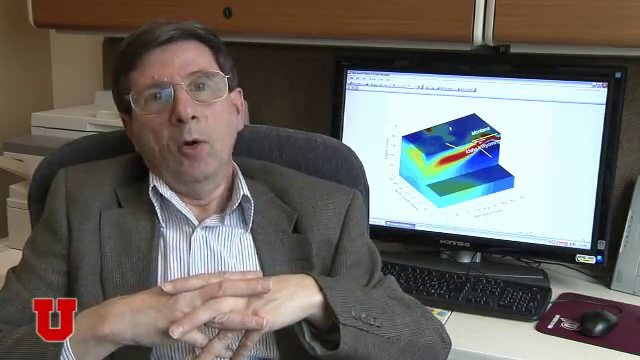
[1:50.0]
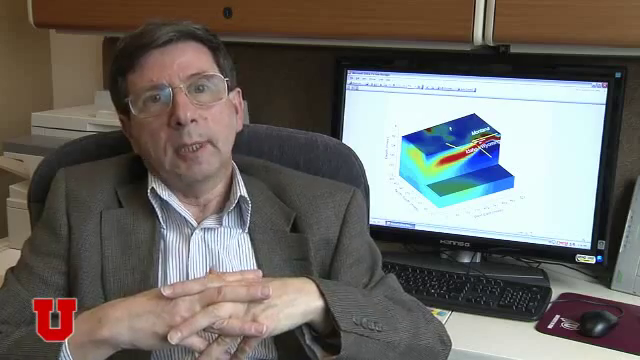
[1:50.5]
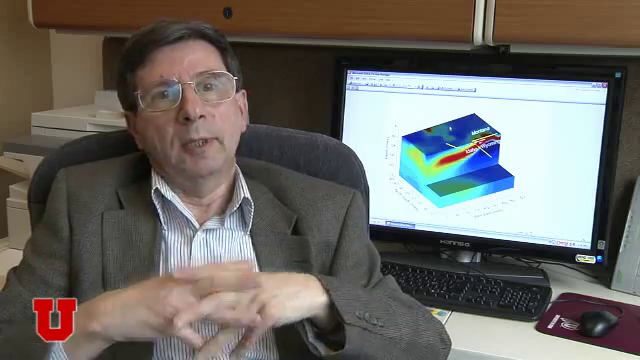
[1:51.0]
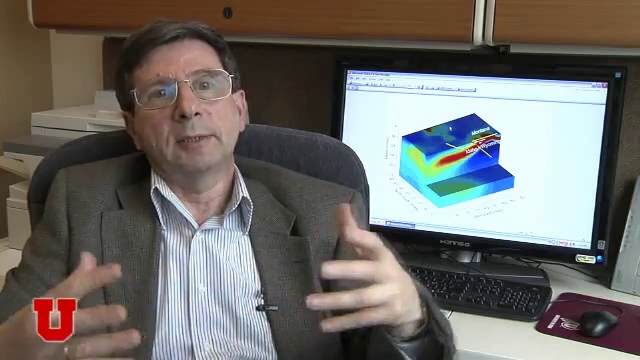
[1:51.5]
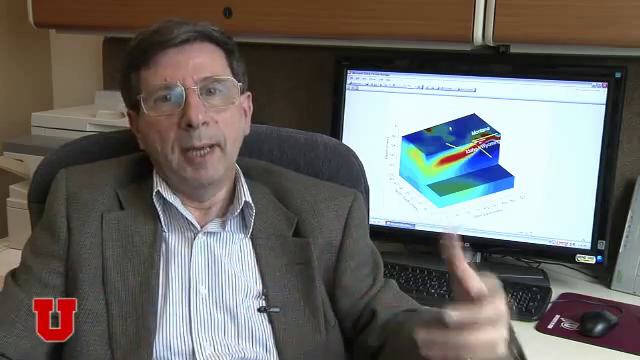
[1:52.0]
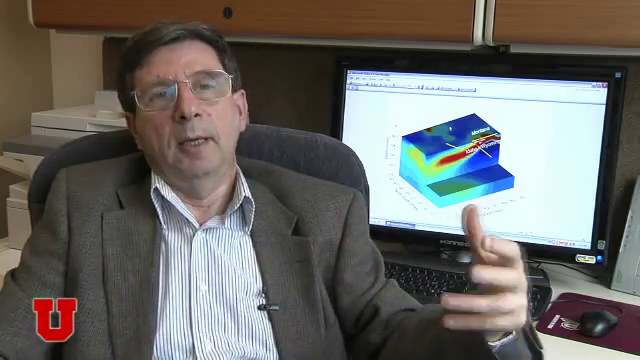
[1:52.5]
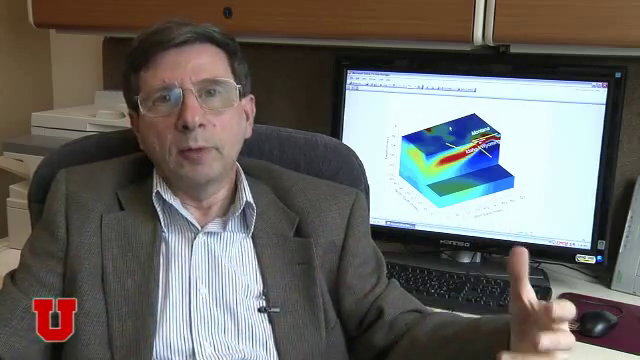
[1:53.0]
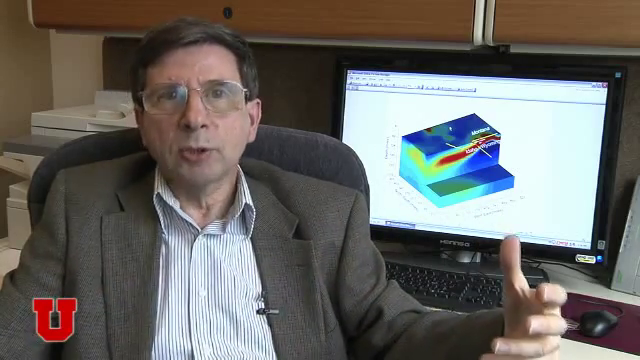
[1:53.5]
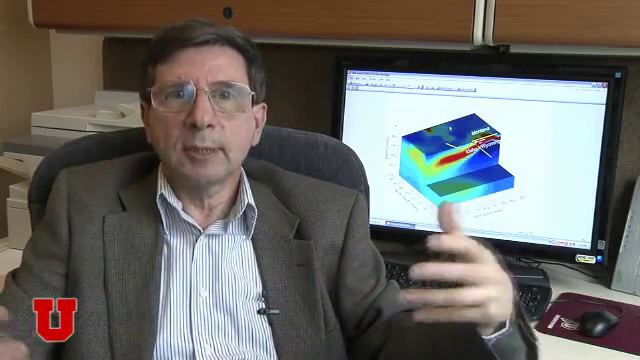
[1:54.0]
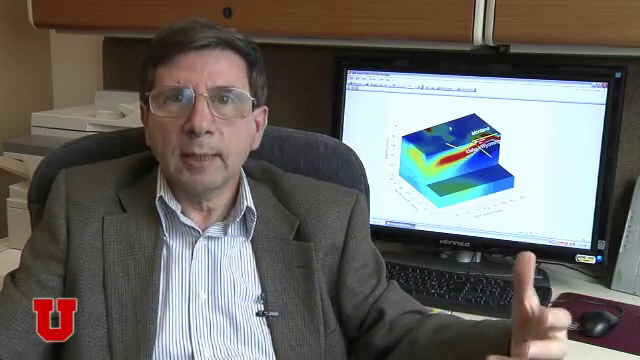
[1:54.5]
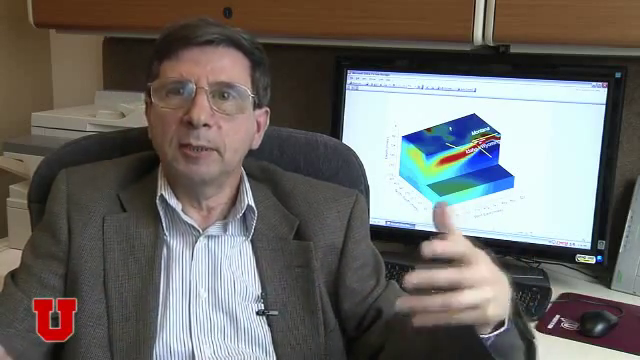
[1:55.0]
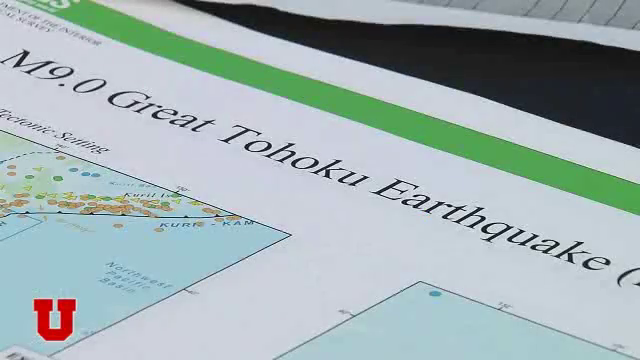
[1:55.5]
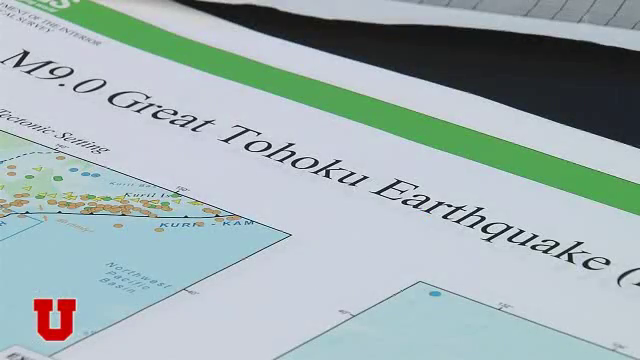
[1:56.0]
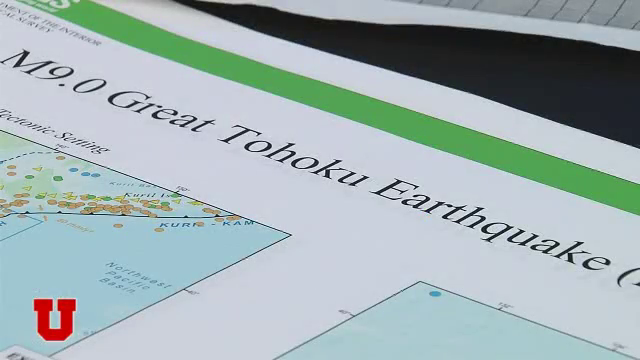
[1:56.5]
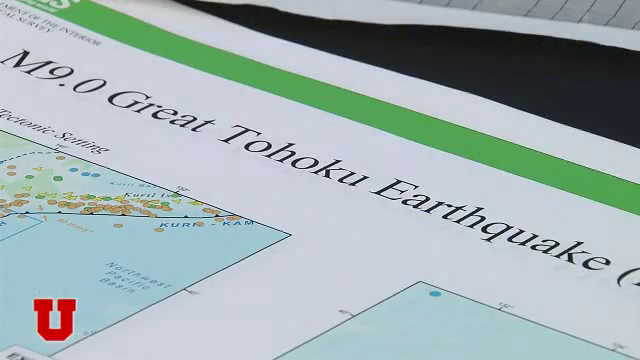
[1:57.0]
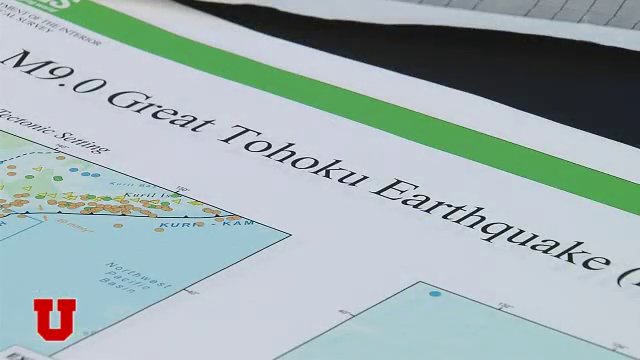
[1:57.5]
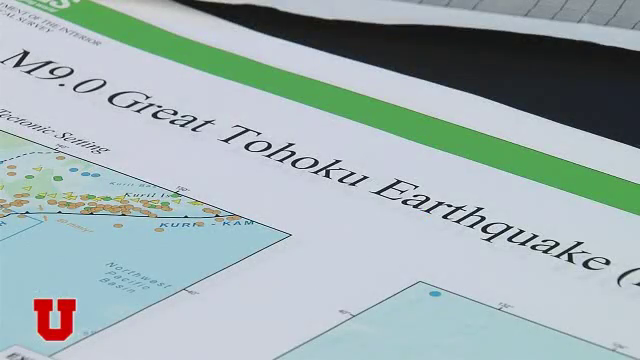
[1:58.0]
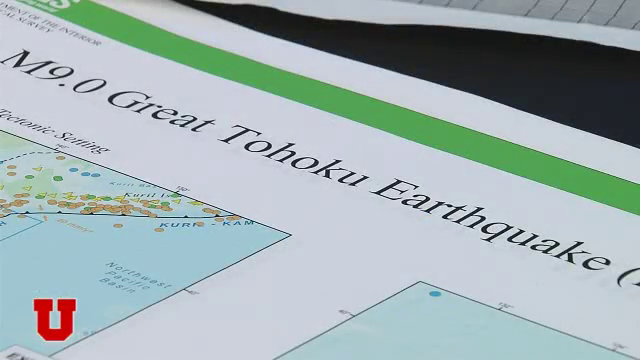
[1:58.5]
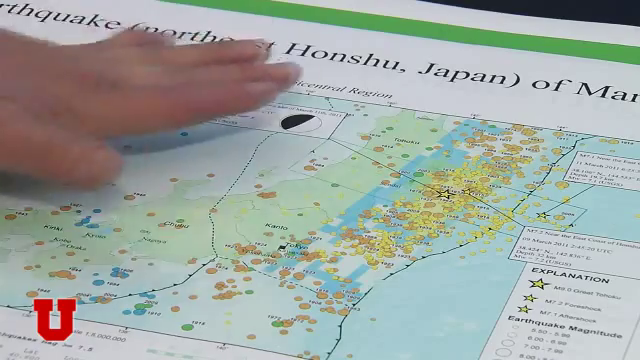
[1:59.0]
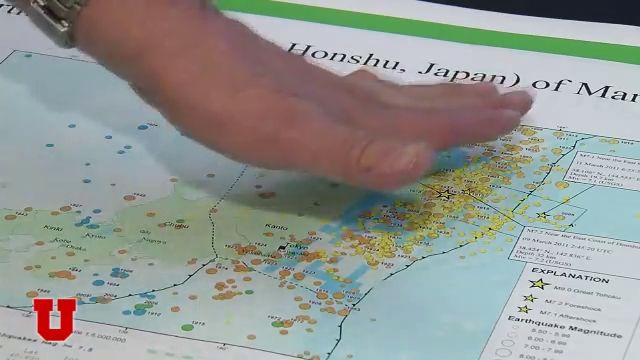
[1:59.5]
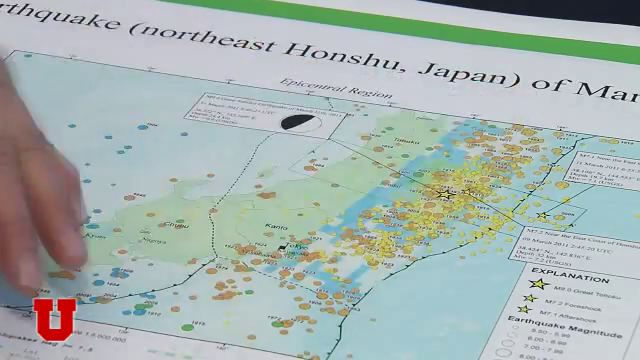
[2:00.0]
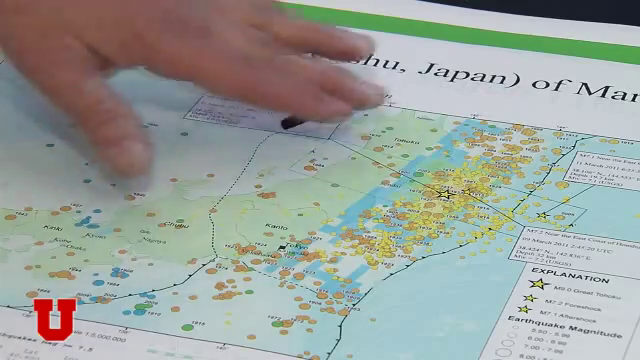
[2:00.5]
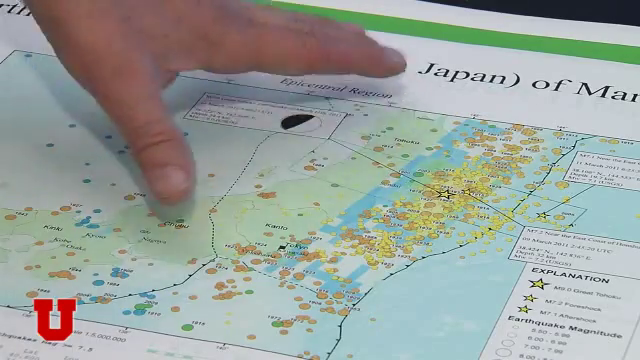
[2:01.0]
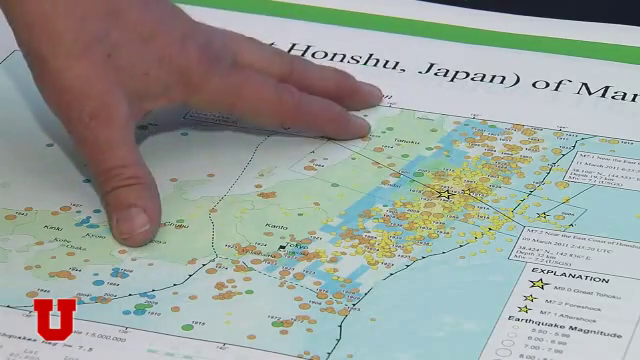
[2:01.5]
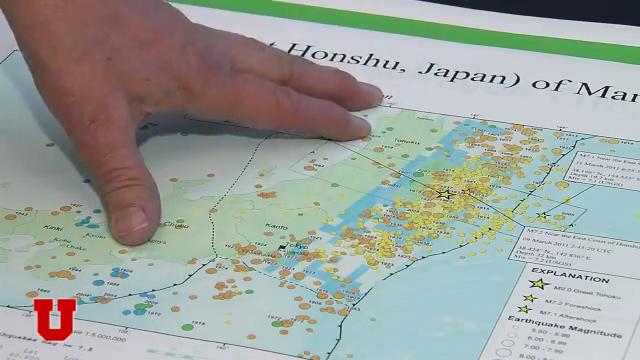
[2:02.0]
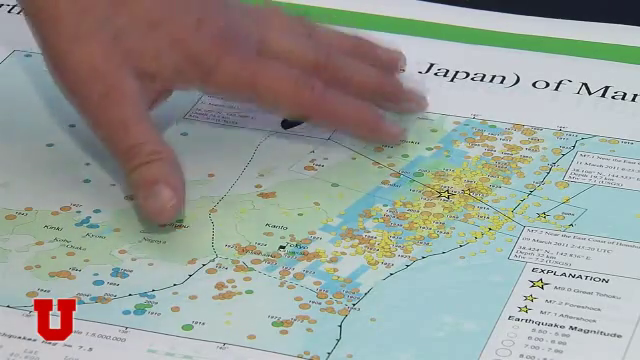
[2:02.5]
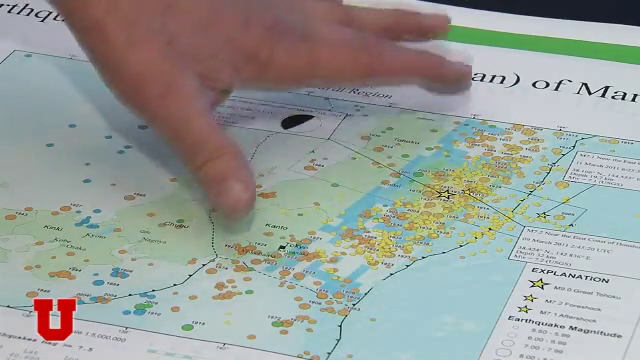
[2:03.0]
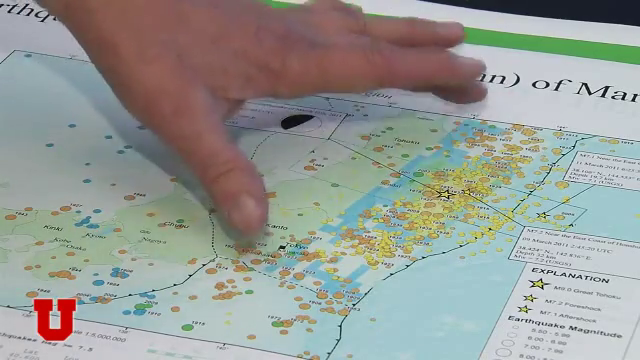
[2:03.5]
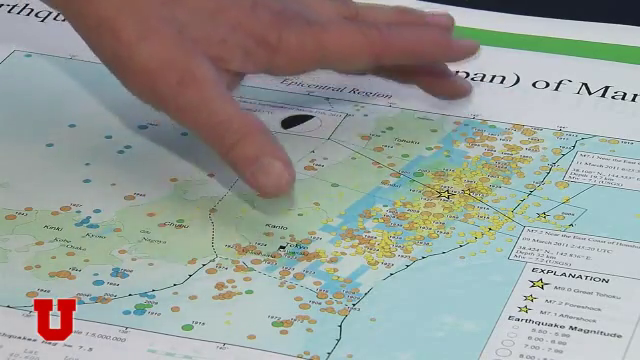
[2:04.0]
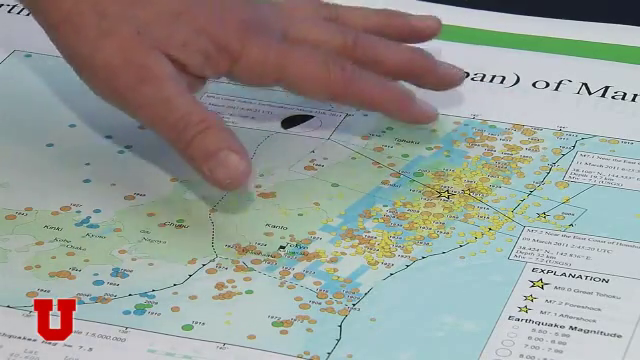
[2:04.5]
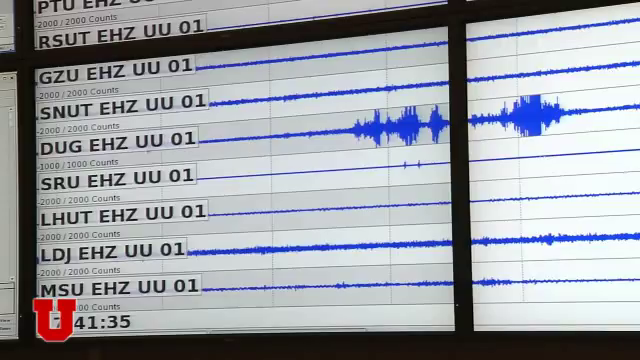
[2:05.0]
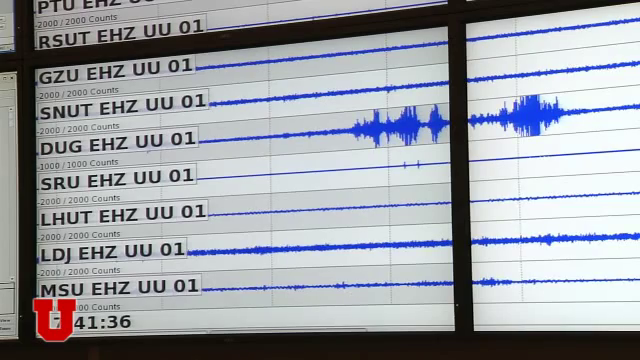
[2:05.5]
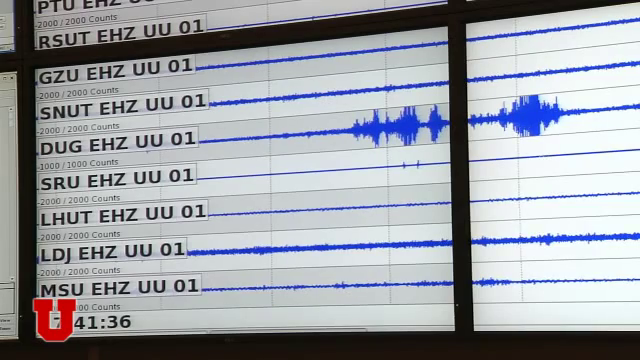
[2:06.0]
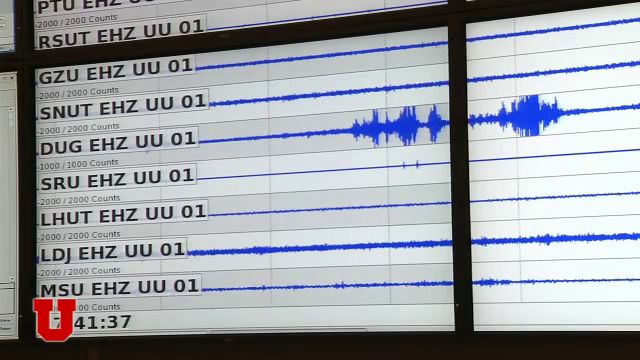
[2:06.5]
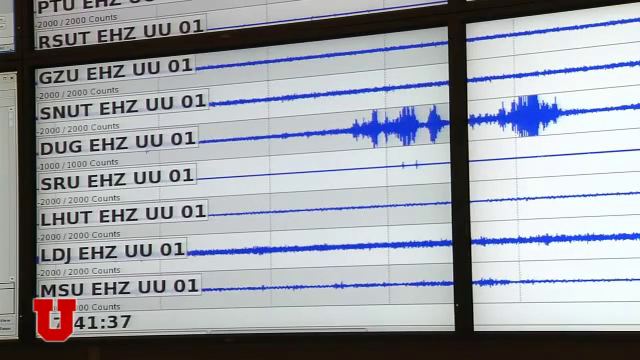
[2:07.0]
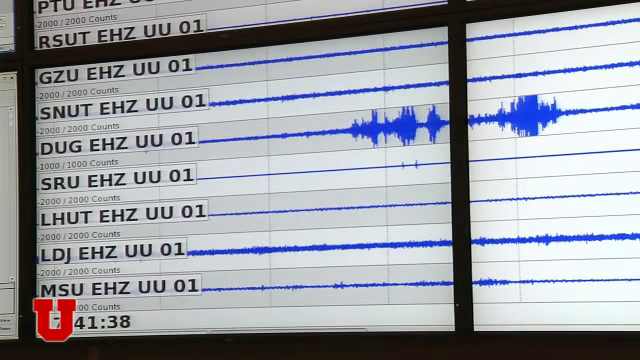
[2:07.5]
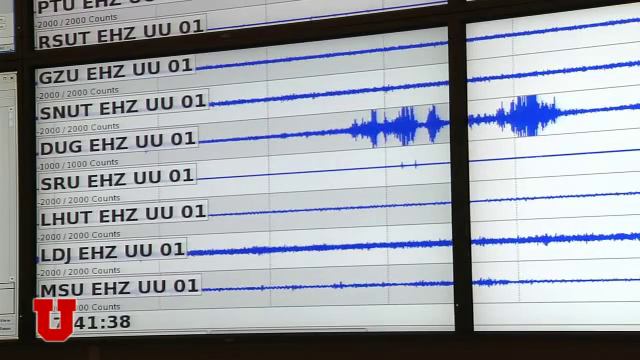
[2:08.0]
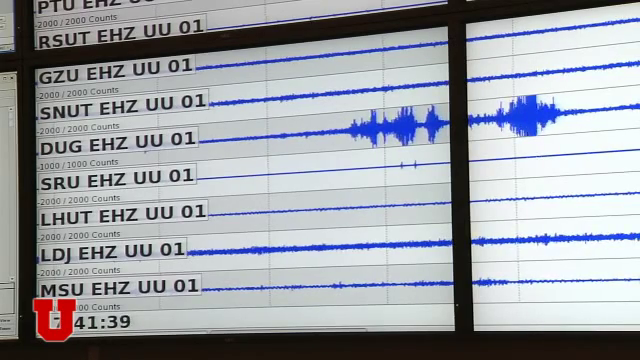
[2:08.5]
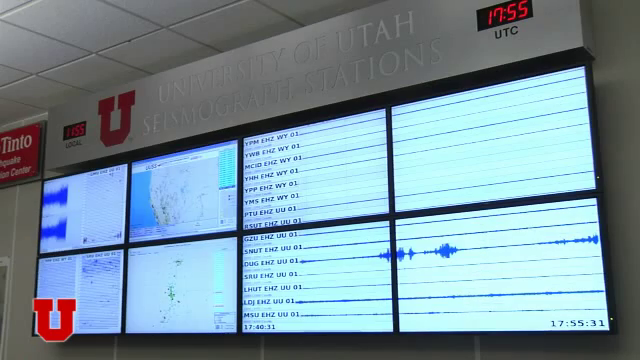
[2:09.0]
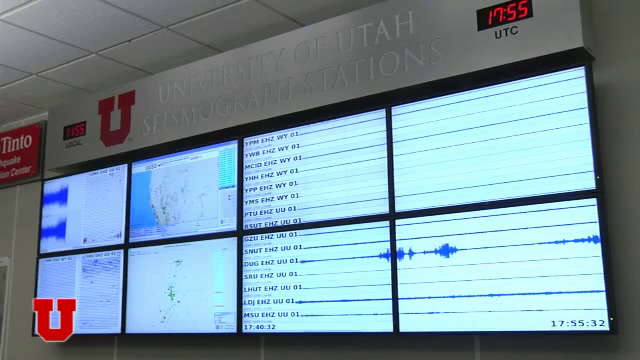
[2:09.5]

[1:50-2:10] A couple of maps are shown, with an animated hand pointing out something on them. Something apparently showing the strength of the earthquake appears, but its text does not look like English. Michael continues to talk.